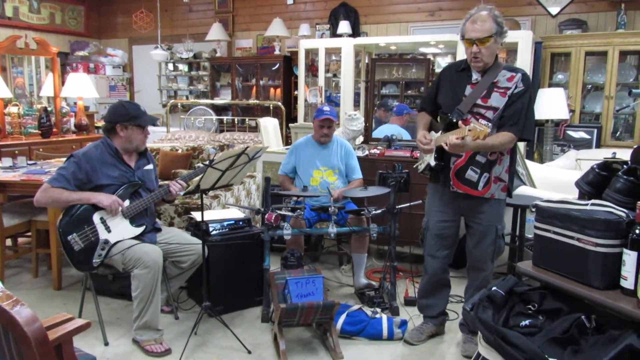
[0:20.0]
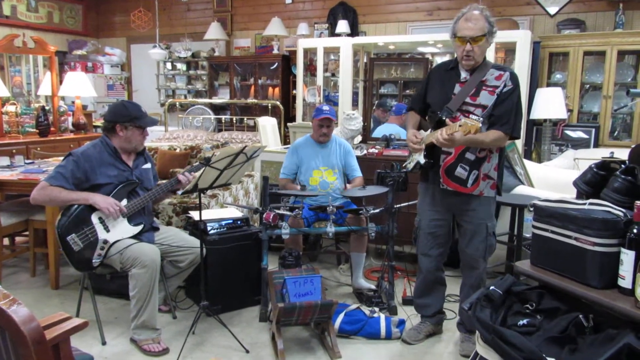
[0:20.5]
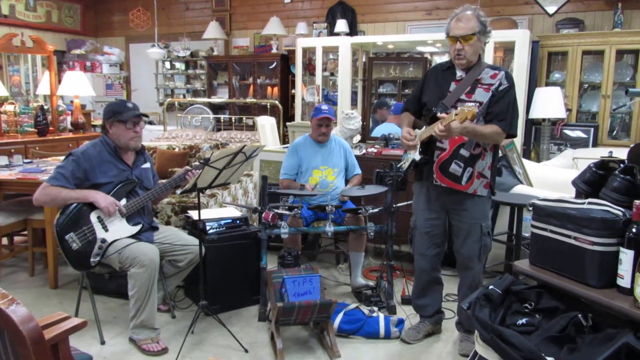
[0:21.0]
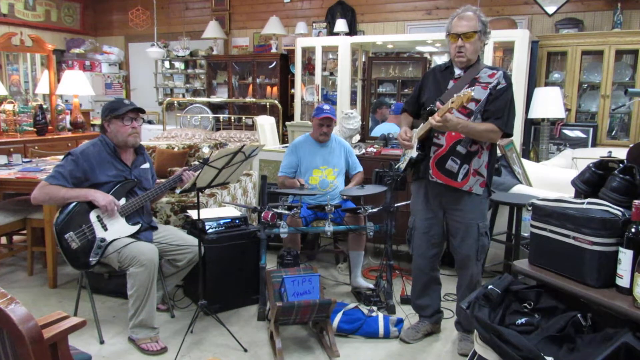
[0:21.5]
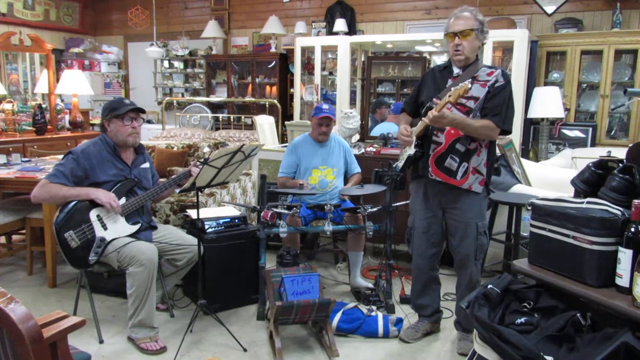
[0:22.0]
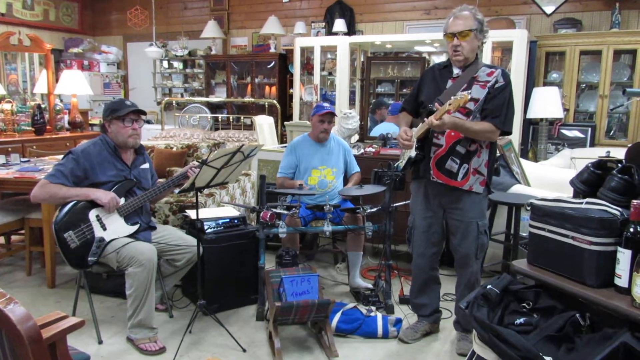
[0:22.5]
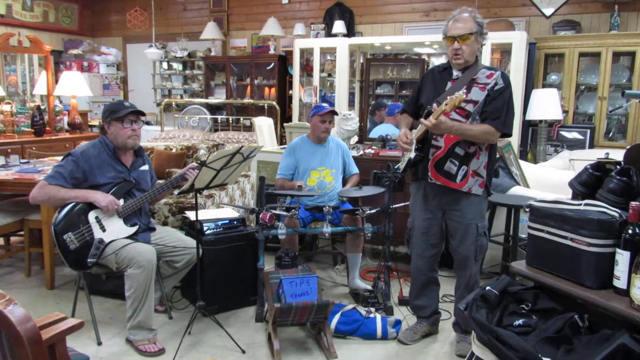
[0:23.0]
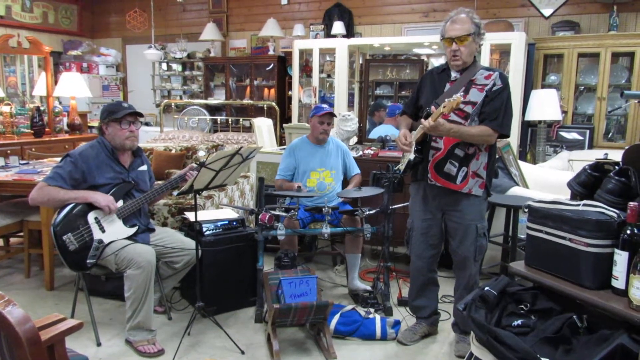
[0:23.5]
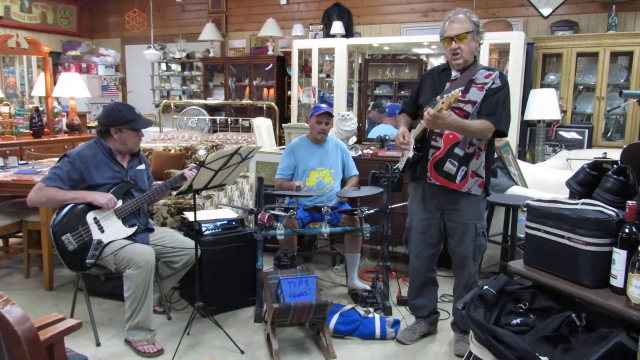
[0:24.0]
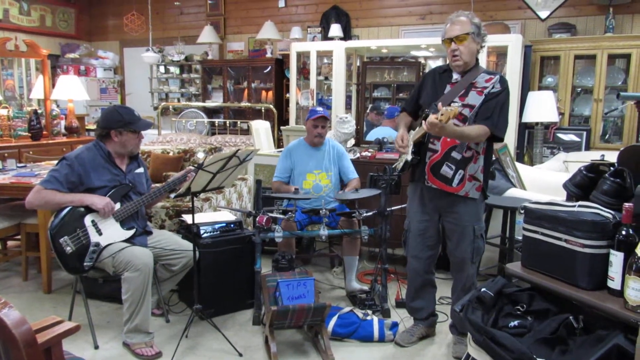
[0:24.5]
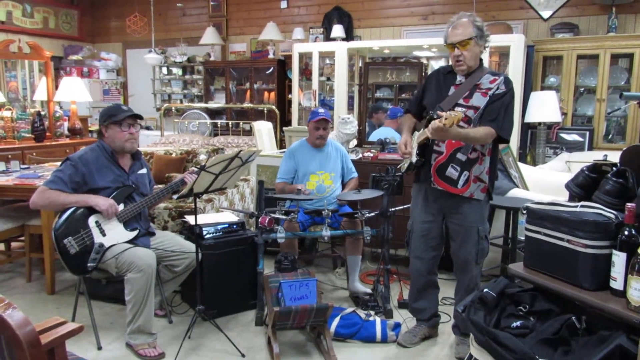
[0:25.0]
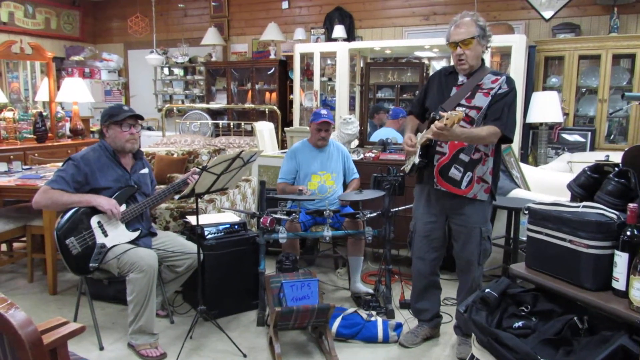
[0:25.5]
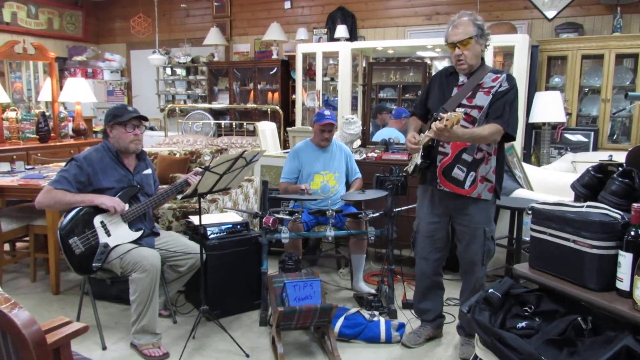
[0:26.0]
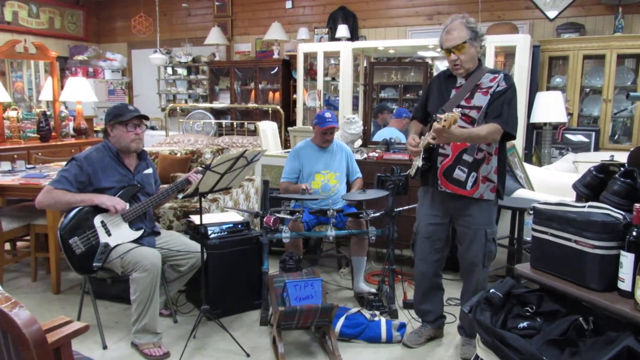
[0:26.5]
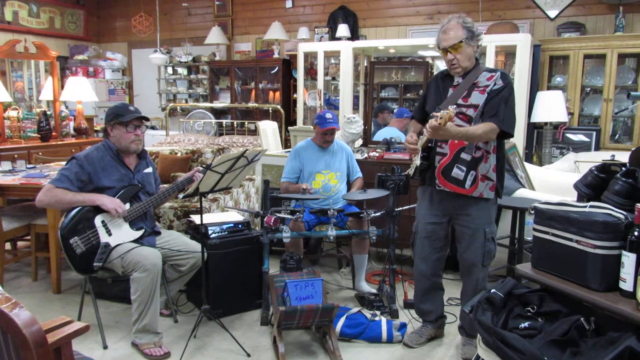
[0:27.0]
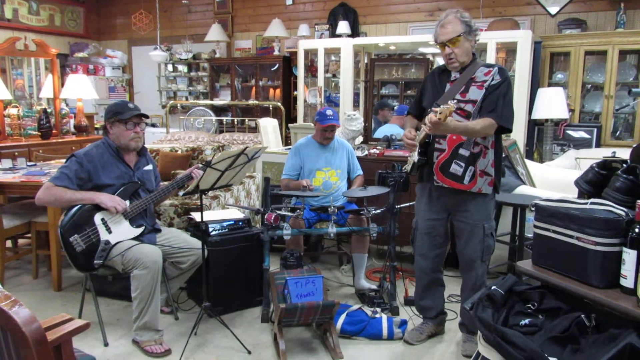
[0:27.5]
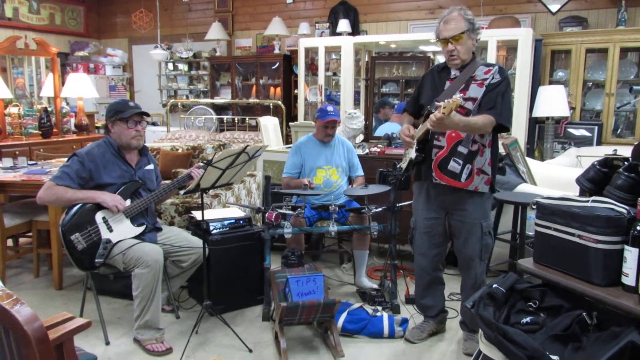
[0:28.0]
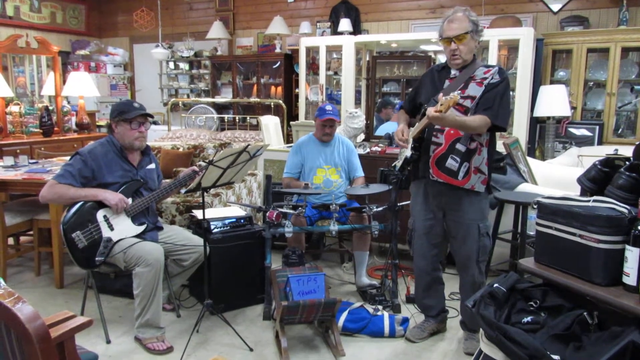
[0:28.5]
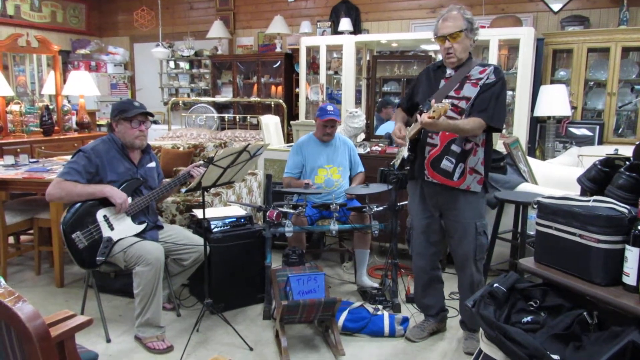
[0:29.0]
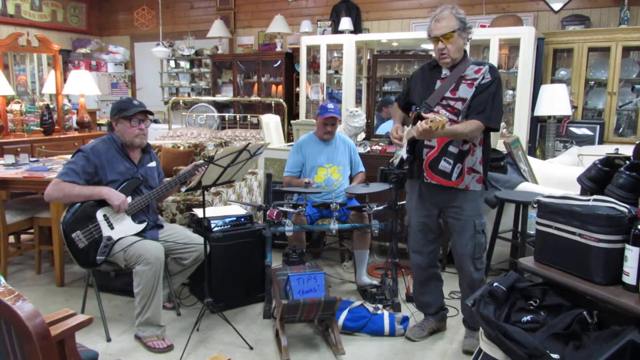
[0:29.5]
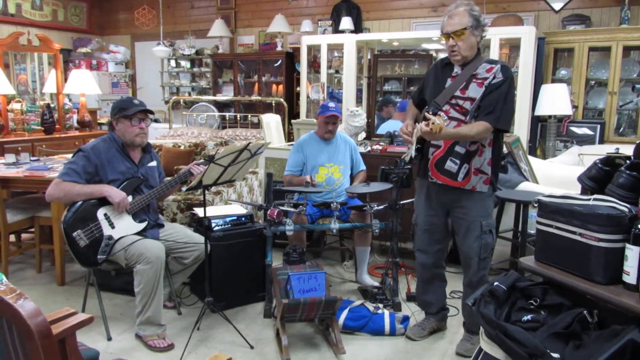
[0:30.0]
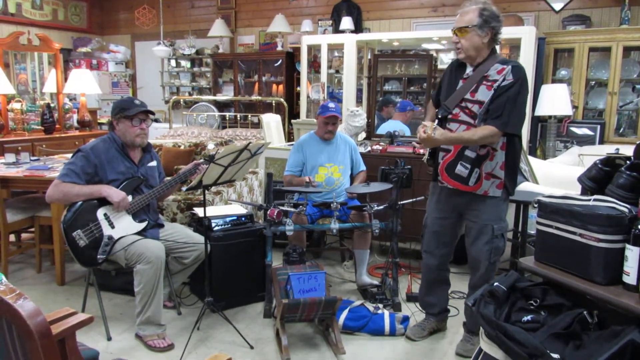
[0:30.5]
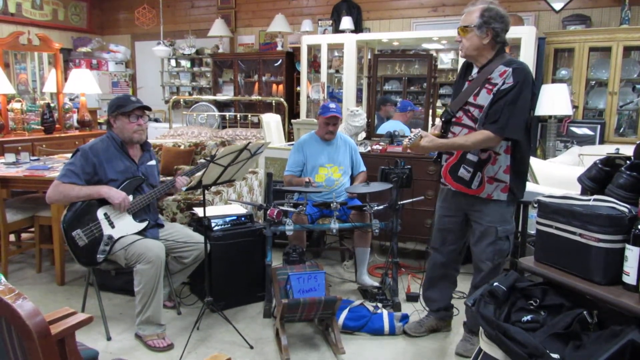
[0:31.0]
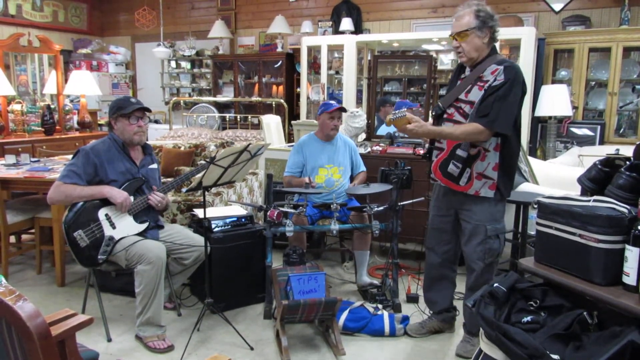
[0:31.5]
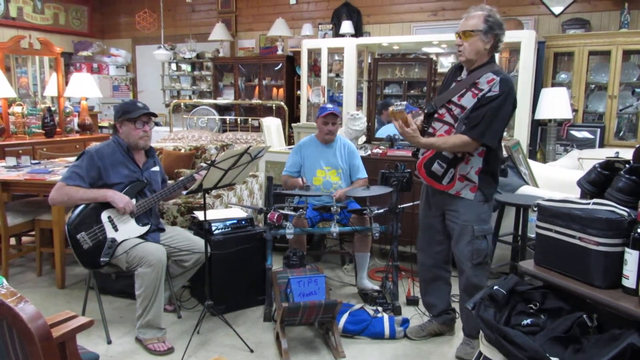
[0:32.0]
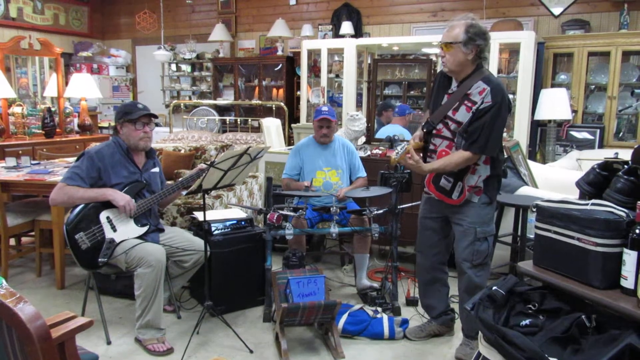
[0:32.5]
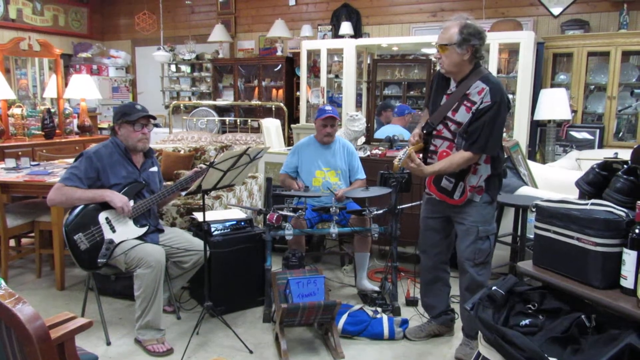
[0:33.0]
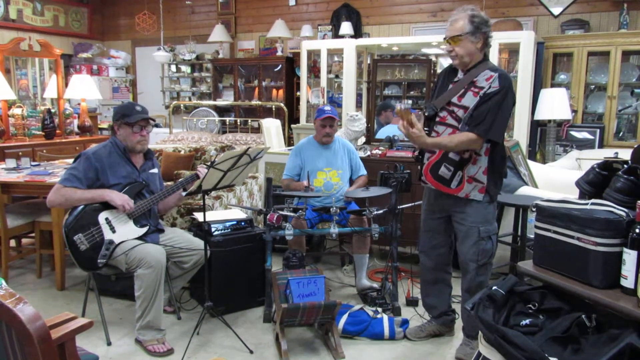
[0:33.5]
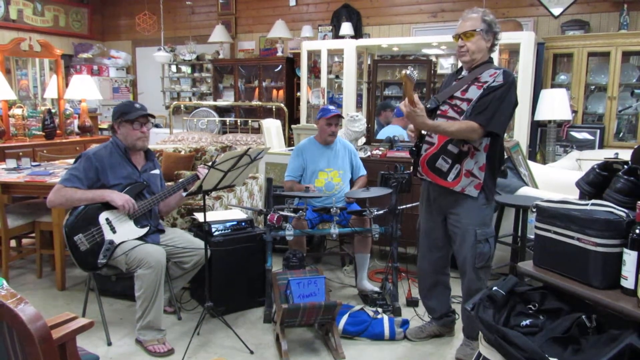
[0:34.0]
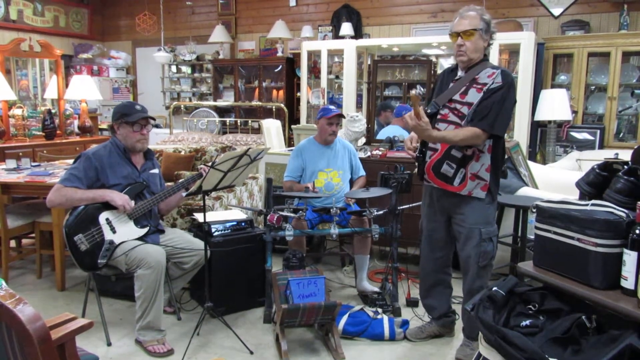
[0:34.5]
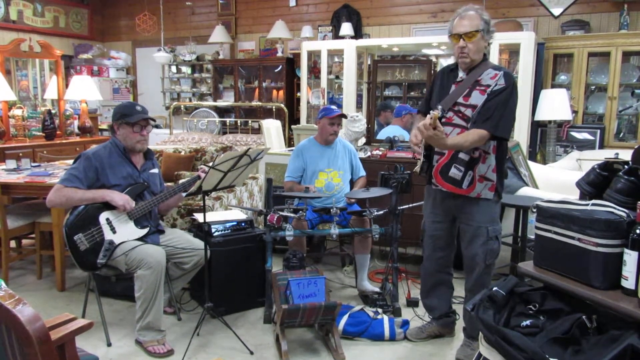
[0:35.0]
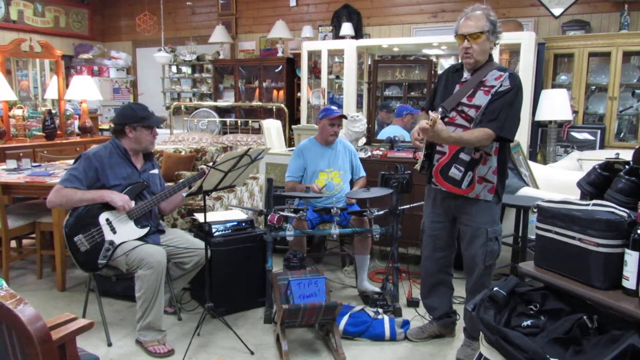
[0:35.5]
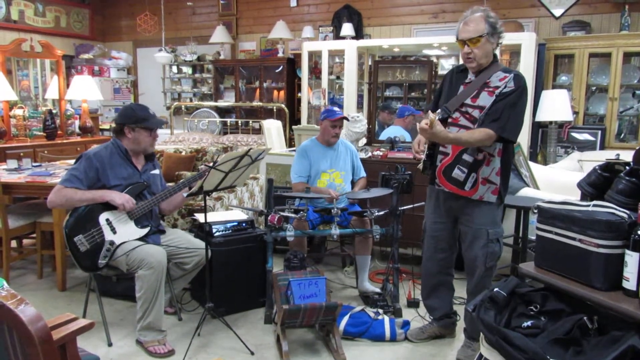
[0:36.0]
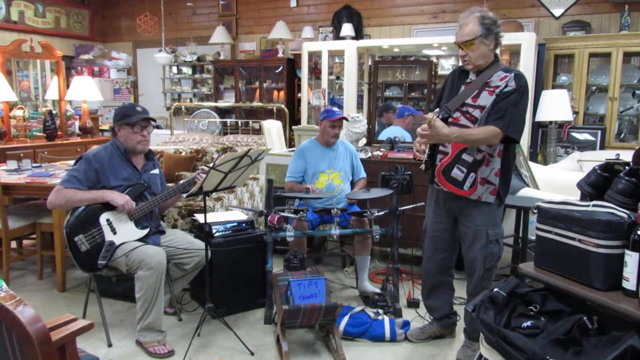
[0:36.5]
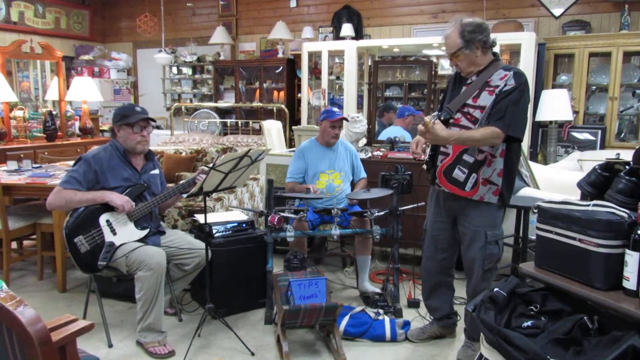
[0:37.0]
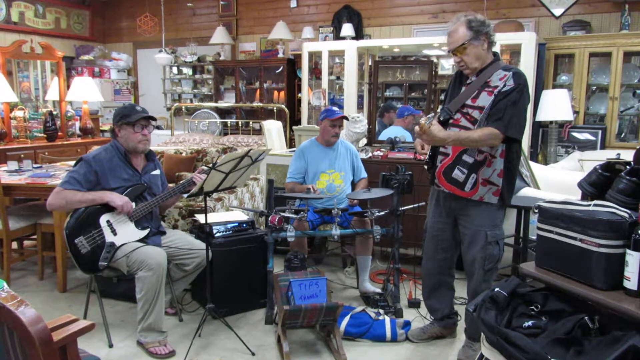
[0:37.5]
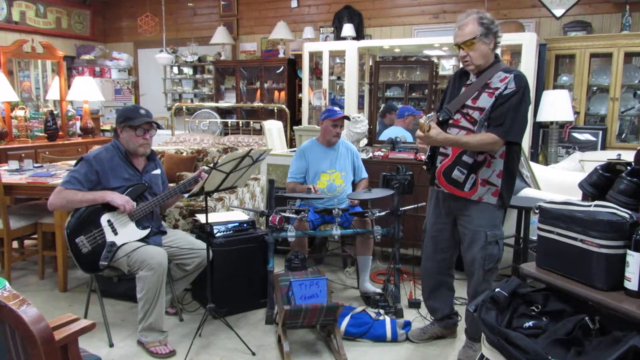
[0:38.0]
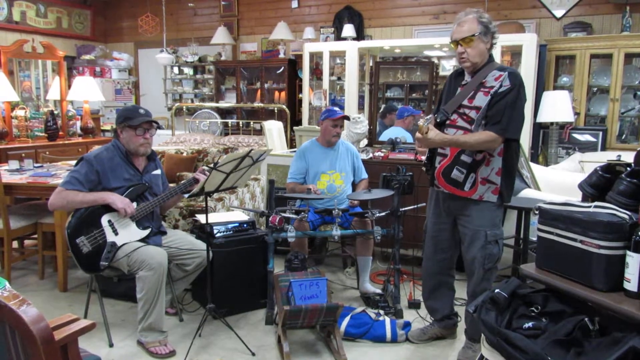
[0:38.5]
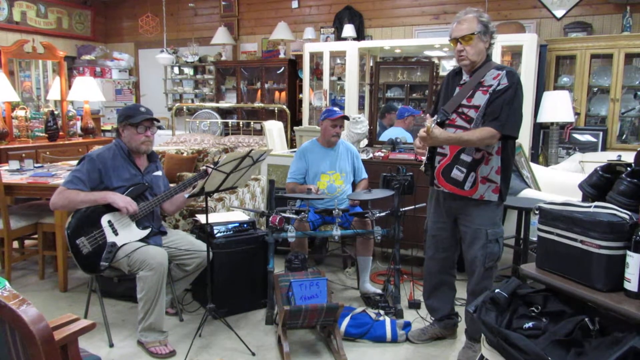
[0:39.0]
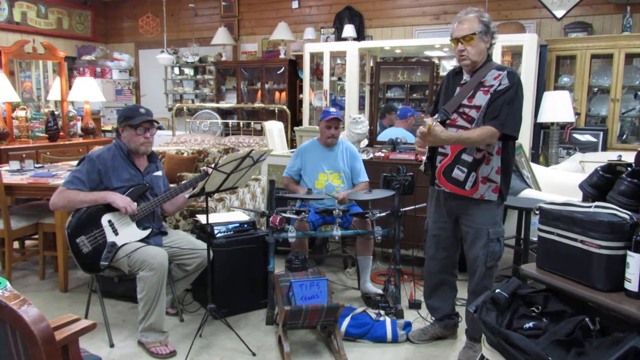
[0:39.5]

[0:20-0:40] The band is practicing, starting off casually with light playing. The drummer is not wearing shoes. There is a tip jar or something similar. A big black amp for the bass guitar is visible, while the amp for the main guitar is not seen. The drummer has drumsticks, a cymbal and a hi-hat; there is no bass drum and not even a snare, as the drums are electronic, while the cymbals are ordinary mechanical cymbals. The place looks like a thrift store or a place just to play music, and there is nobody else in it.